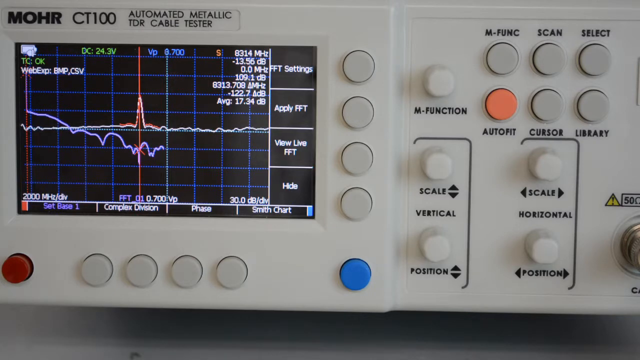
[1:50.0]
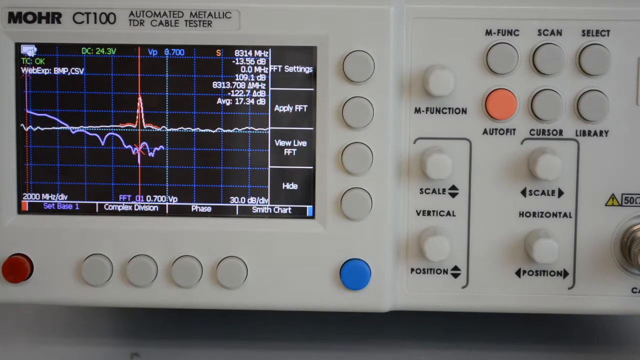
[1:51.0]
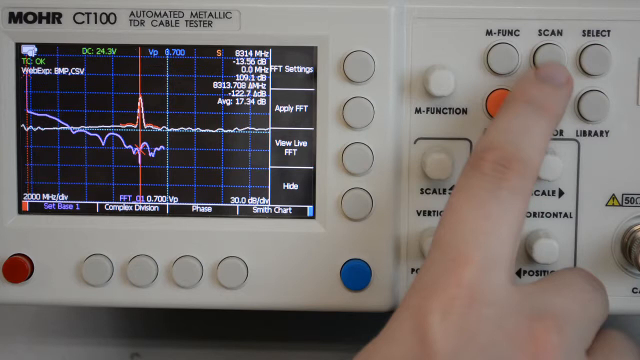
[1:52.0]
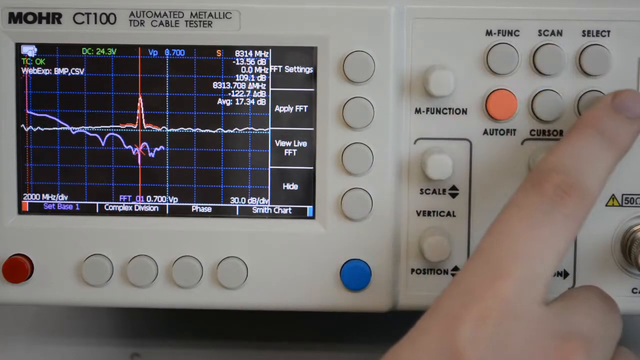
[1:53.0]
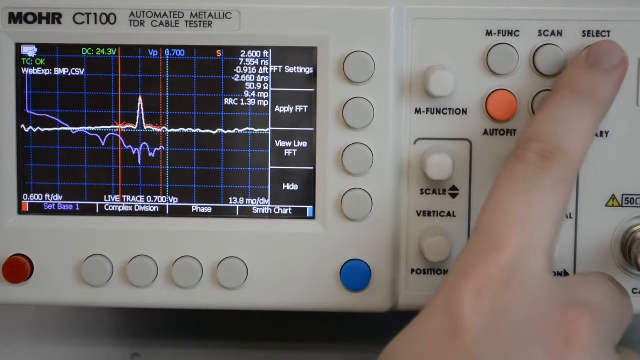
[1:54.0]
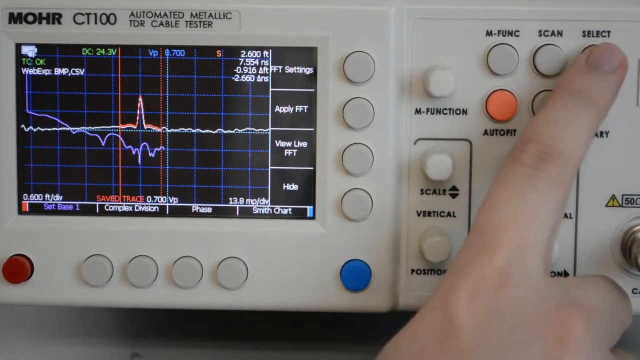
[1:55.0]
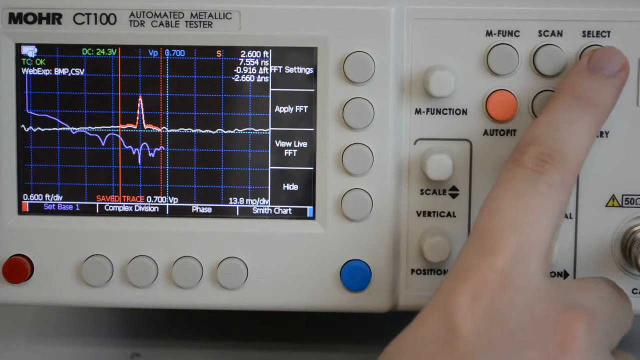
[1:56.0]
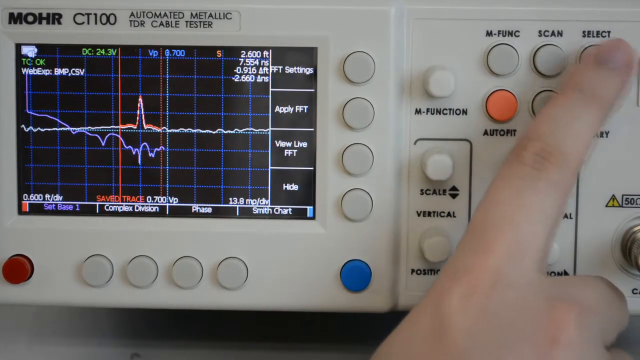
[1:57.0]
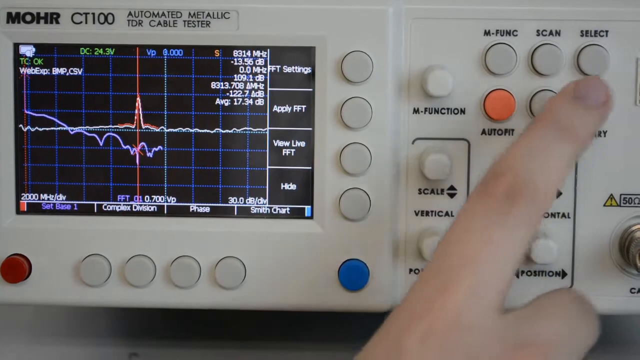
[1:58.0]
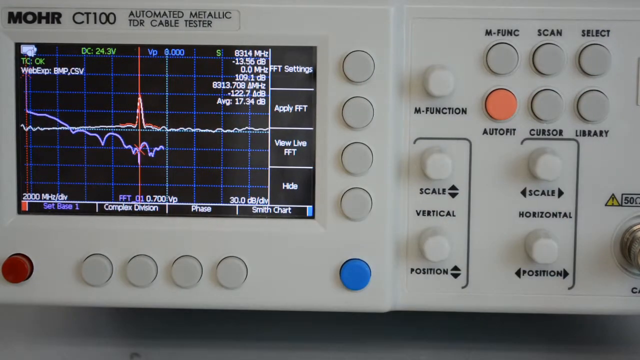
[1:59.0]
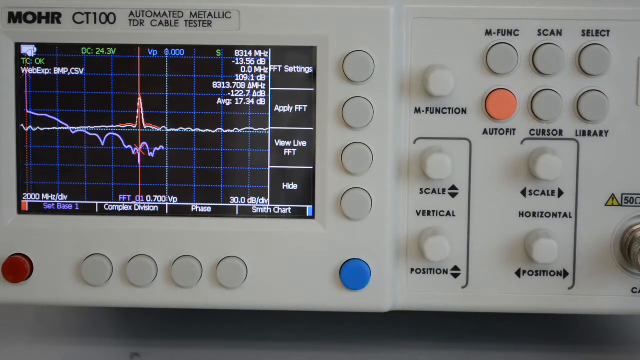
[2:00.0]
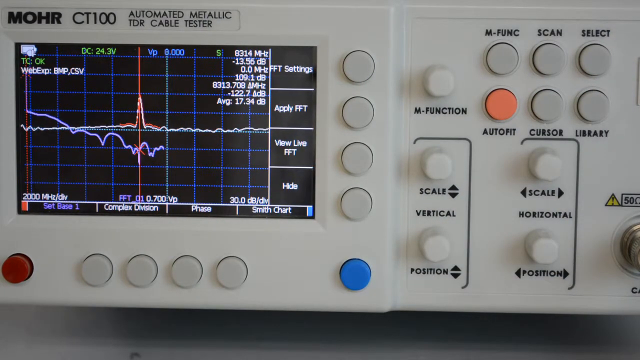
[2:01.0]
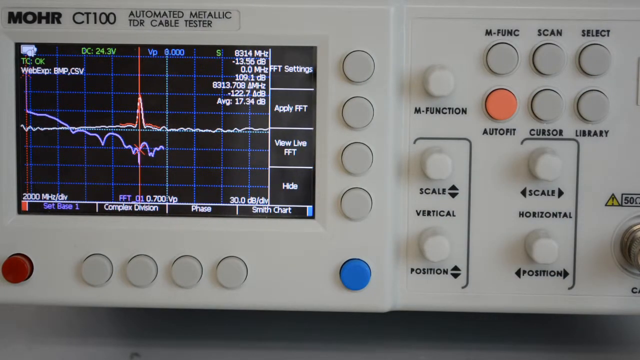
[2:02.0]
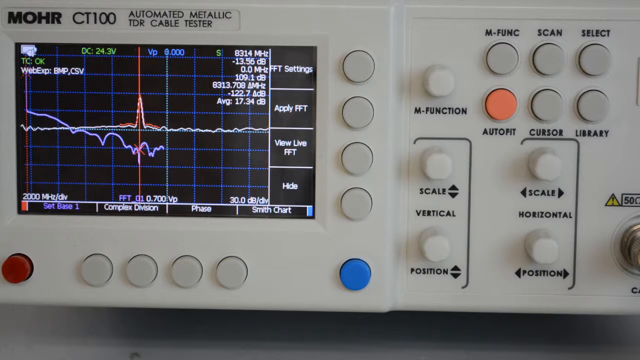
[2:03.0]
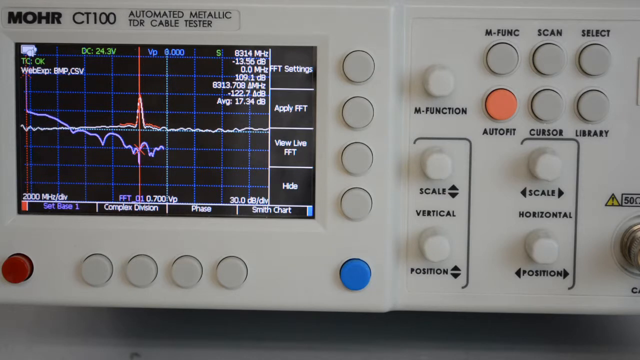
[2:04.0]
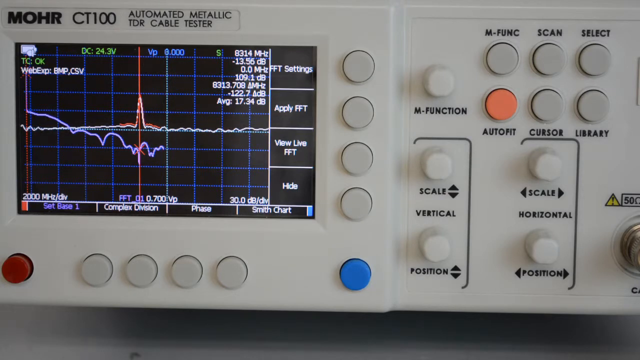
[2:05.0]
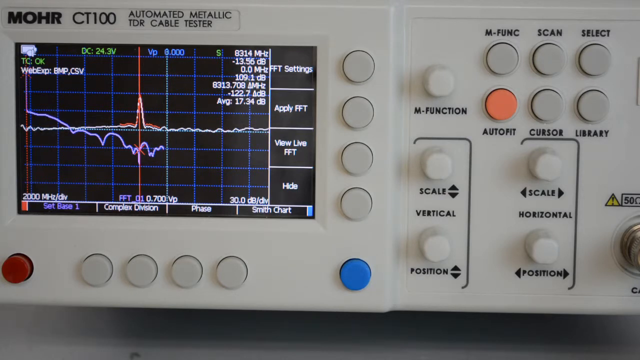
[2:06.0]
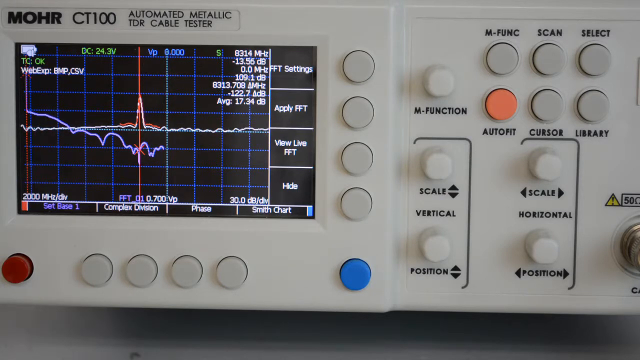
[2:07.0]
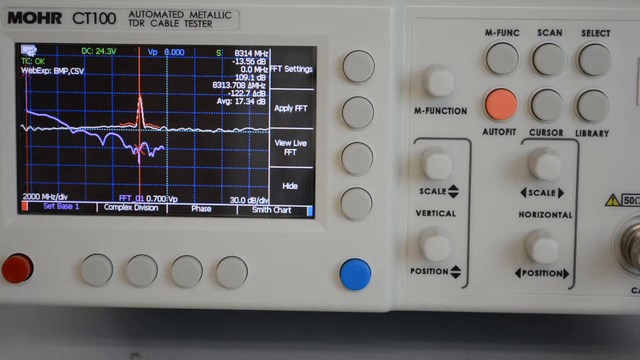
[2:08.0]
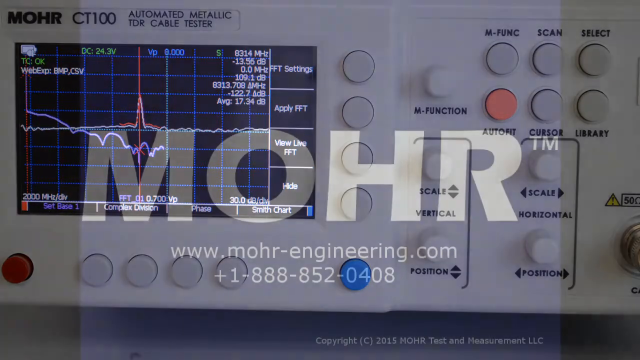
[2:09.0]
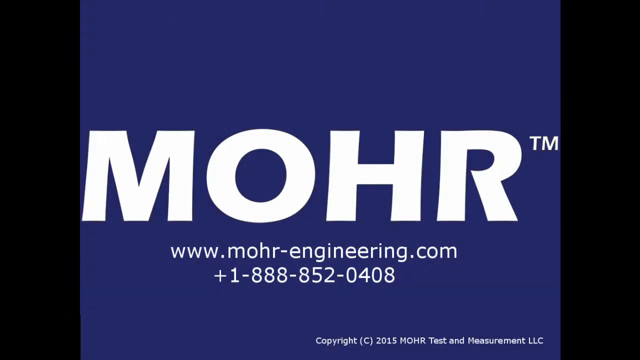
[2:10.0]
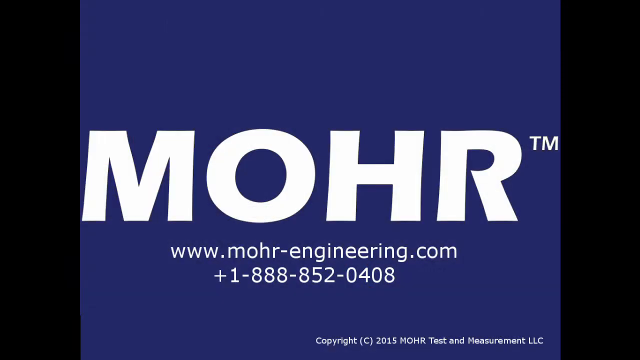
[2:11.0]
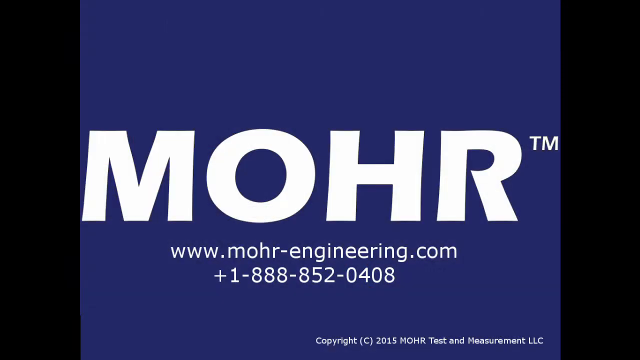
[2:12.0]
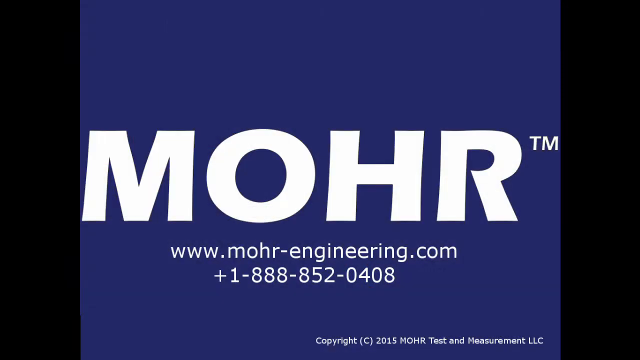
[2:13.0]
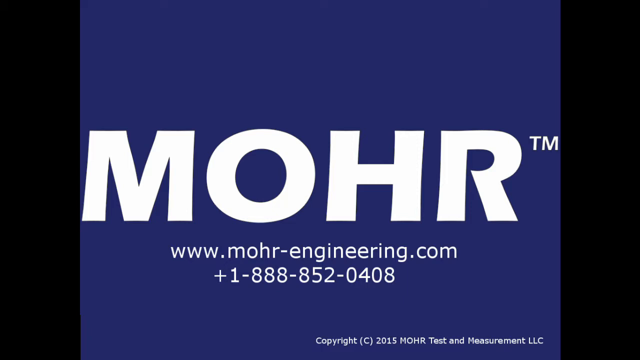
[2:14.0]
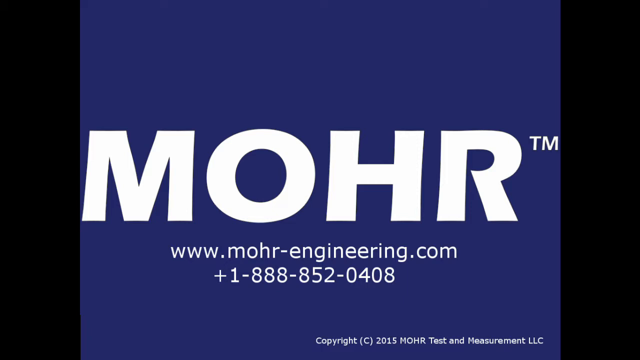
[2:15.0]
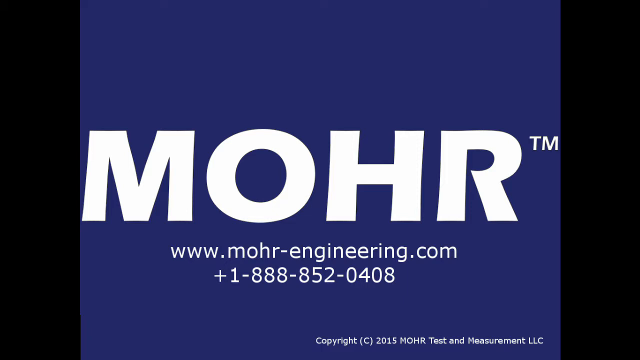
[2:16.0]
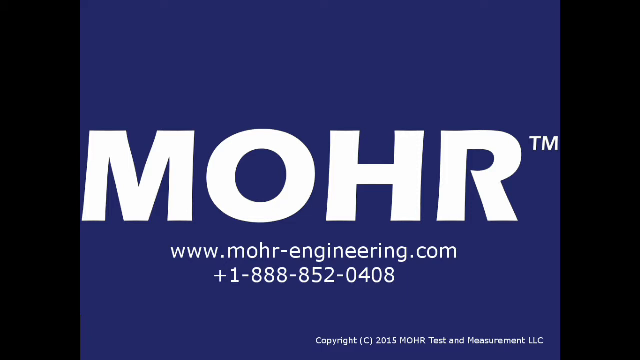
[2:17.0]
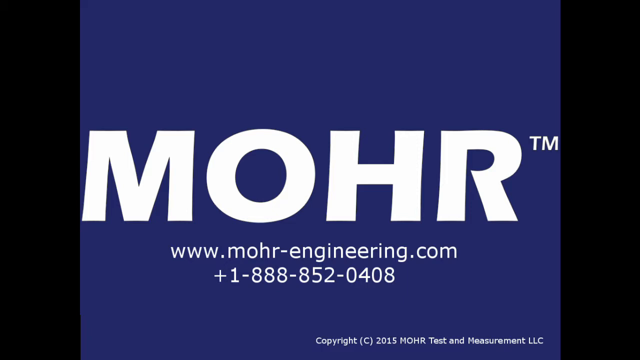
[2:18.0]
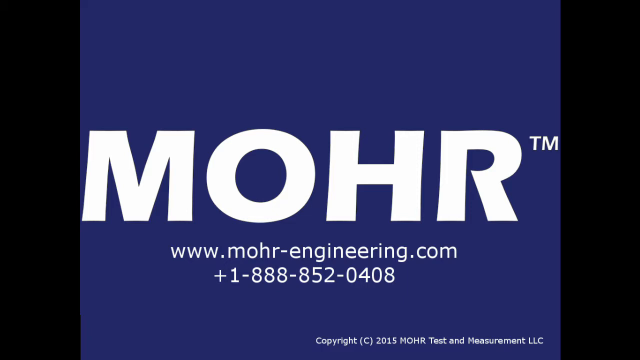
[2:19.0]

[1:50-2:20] The device's screen, buttons and knobs are in view. A right index finger slowly moves up from the bottom of the frame to the top right corner, where it hovers underneath the Select and Scan buttons. It sort of waves between those two buttons for several seconds before hovering directly over the Select button, appears to rest on it, and then presses it; the screen changes at the same moment the button is pressed. The finger then sort of waves off to the right side and retracts as the hand moves back down out of view. Some spots on the device's screen change their text and flash in the upper left corner before the video finally cuts to a Mohr Engineering screen with a website and phone number.